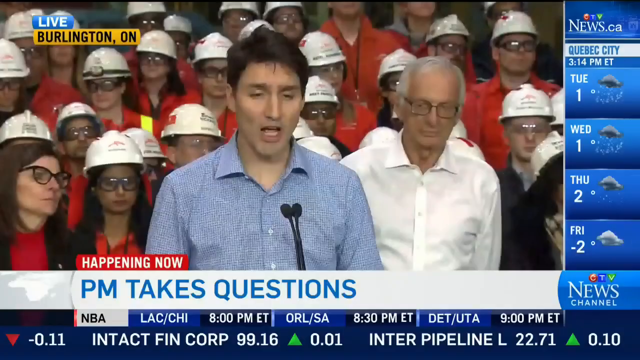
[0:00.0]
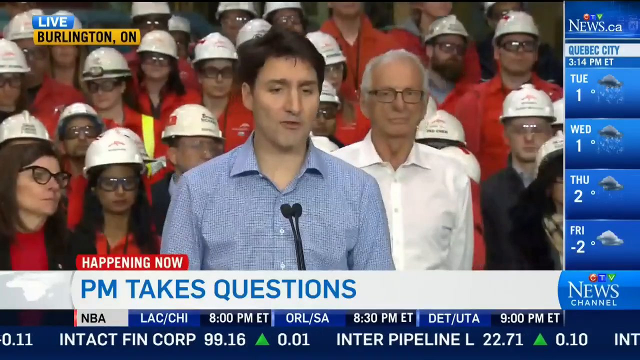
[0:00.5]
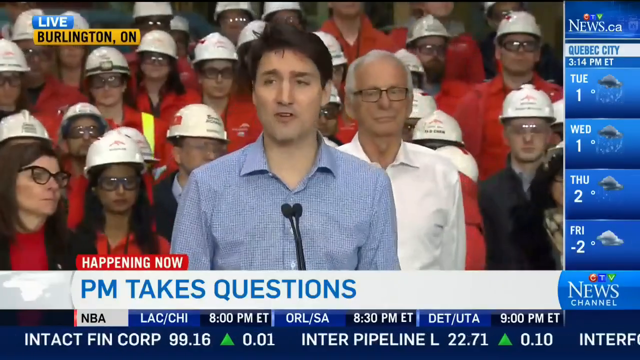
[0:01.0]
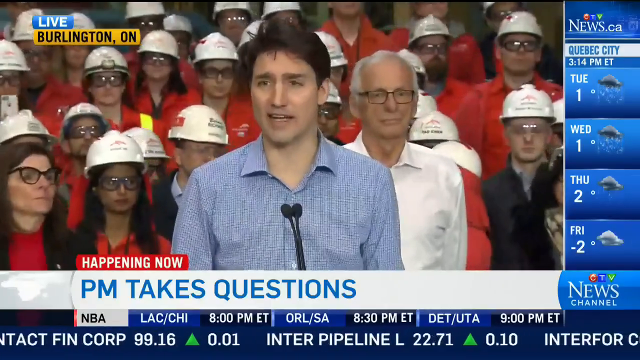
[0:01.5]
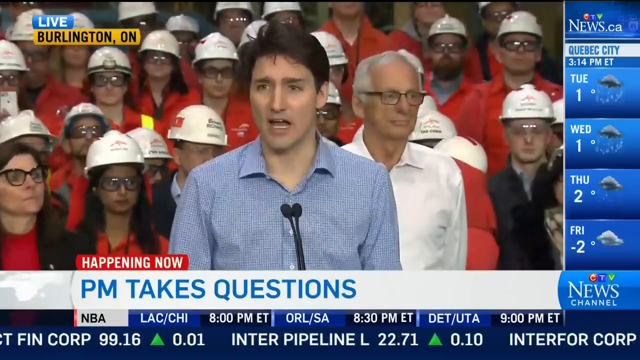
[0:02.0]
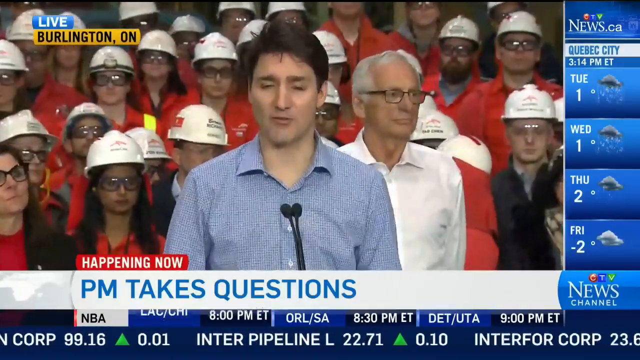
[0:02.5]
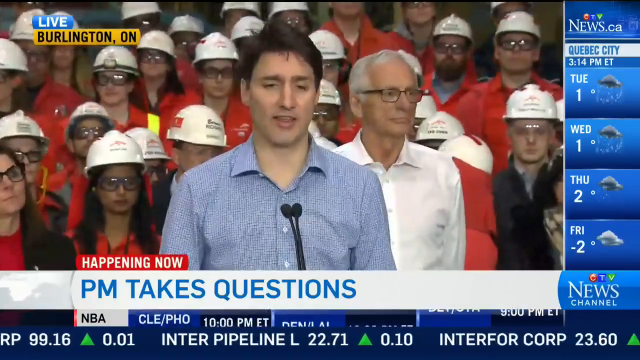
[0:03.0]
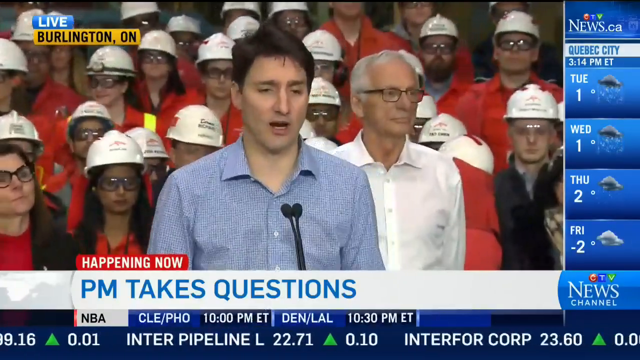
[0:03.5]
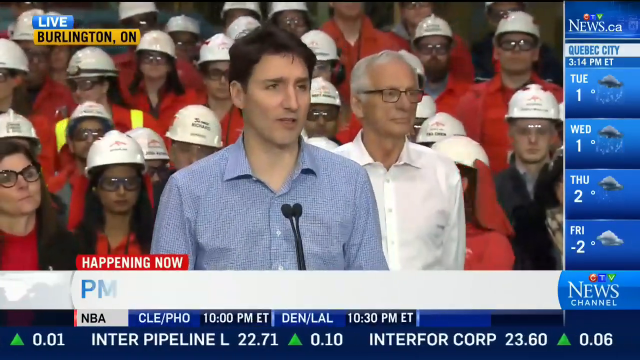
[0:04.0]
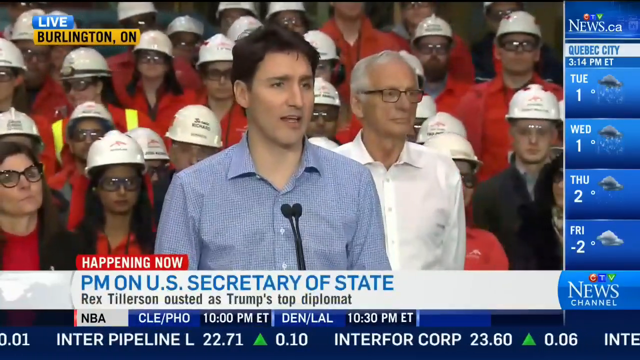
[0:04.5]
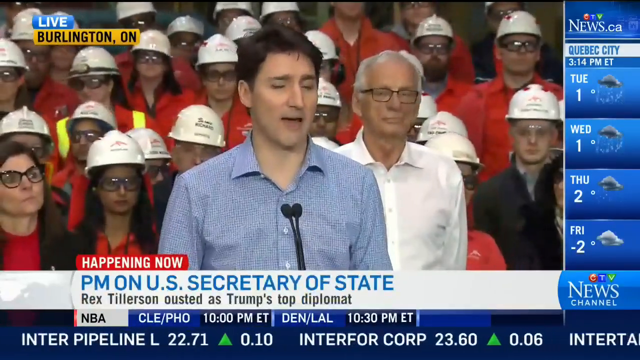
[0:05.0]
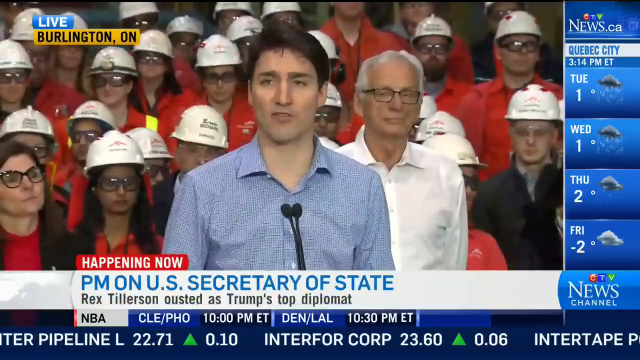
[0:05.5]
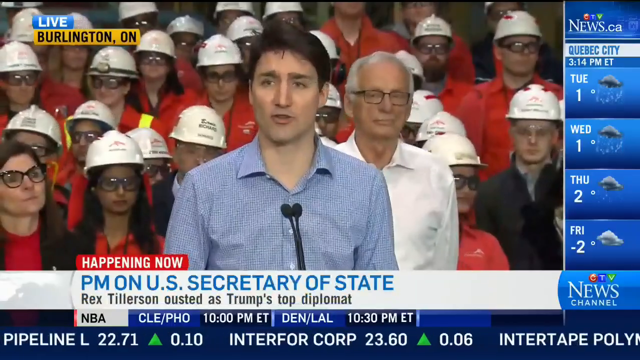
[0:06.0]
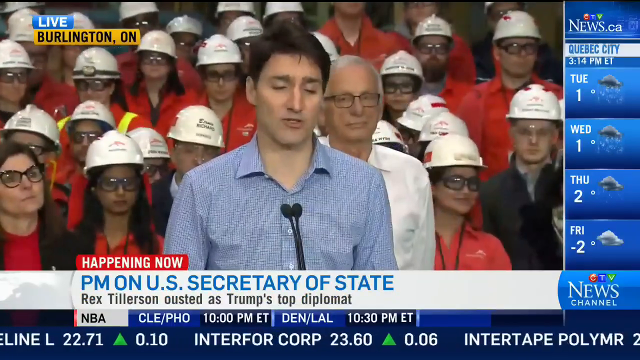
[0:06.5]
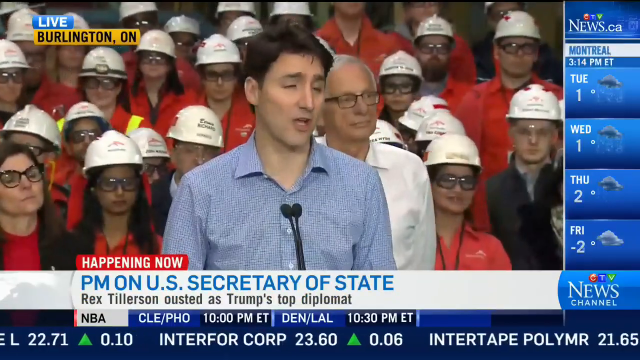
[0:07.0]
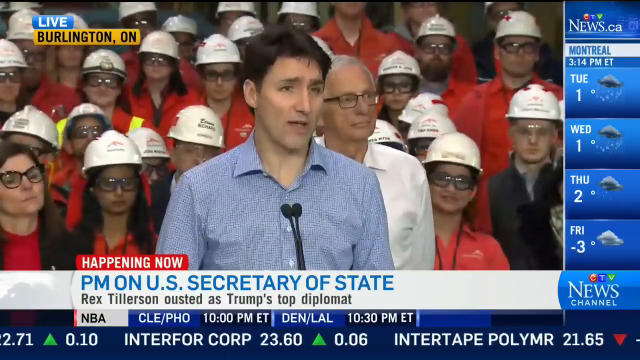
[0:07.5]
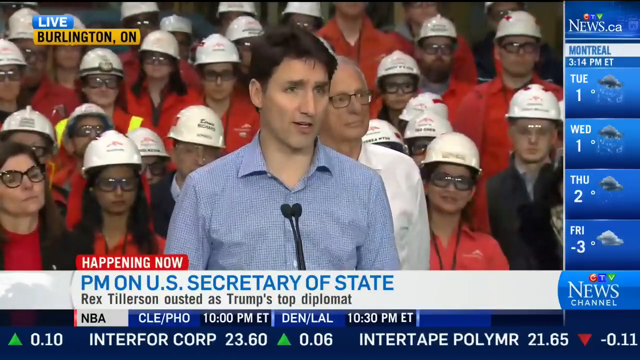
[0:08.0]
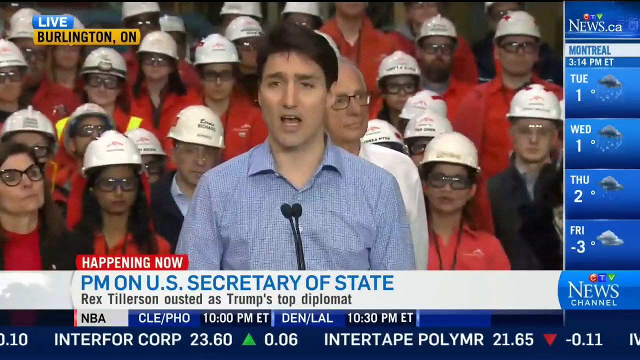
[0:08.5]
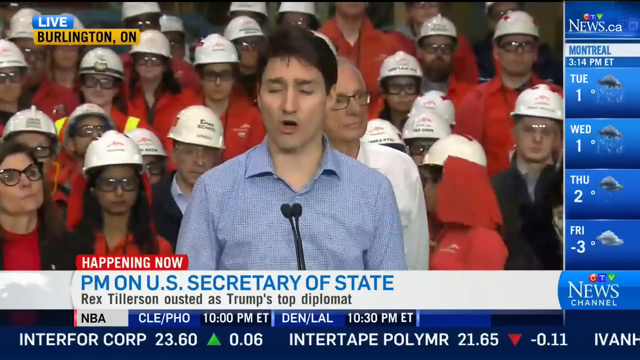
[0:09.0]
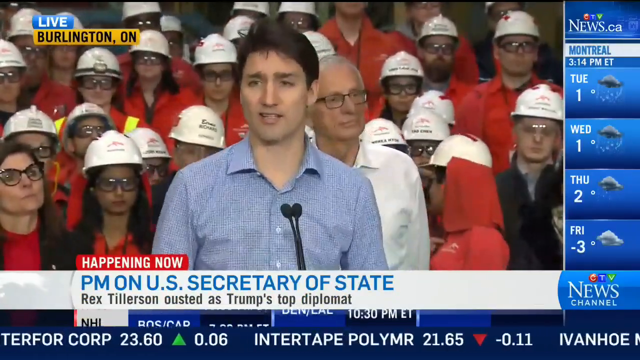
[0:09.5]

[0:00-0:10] A news channel broadcast is live in Burlington, and text at the bottom reads "happening now PM takes question". A person in a blue t-shirt is in front of a mic, probably the one taking questions. Behind him are workers wearing mostly red and black, with white helmets on. Another man, to the right of the one in front, wears a white t-shirt. The weather for Quebec City is displayed on the right side. The person in front of the mic is speaking. The text at the bottom changes to read "PM on US Secretary of State Rex Tillerson ousted as Trump's top diplomat".